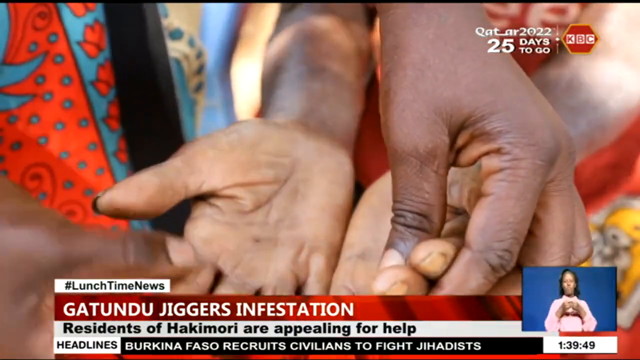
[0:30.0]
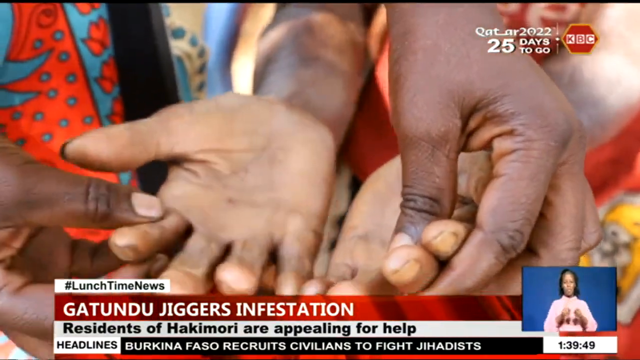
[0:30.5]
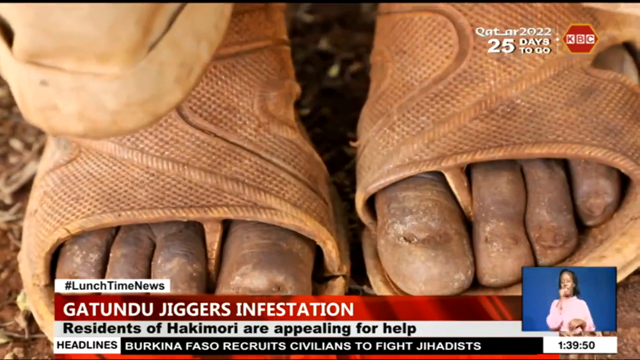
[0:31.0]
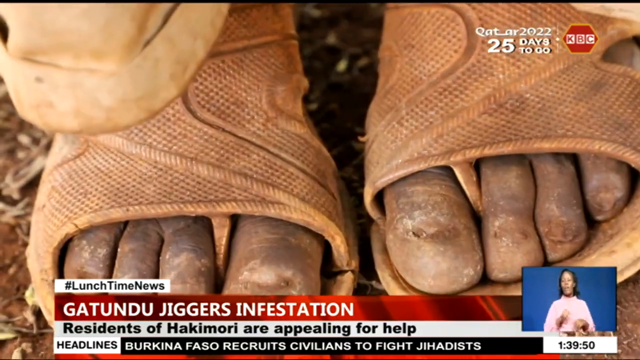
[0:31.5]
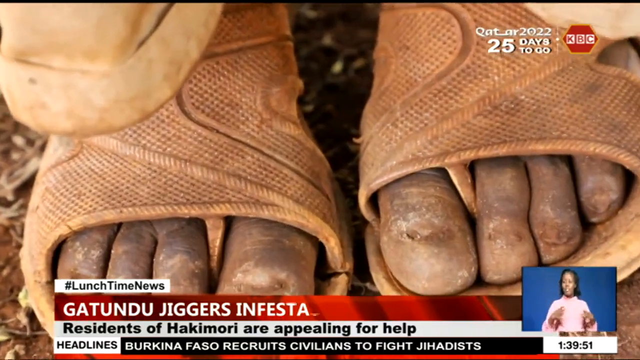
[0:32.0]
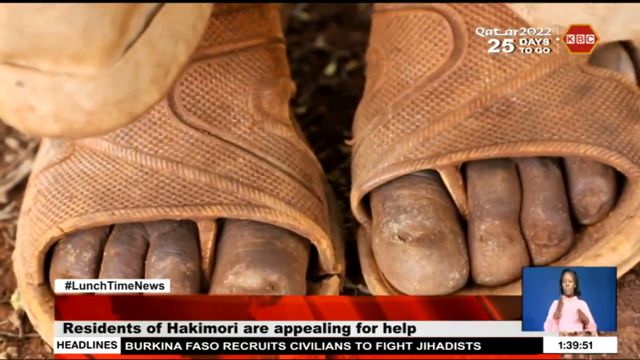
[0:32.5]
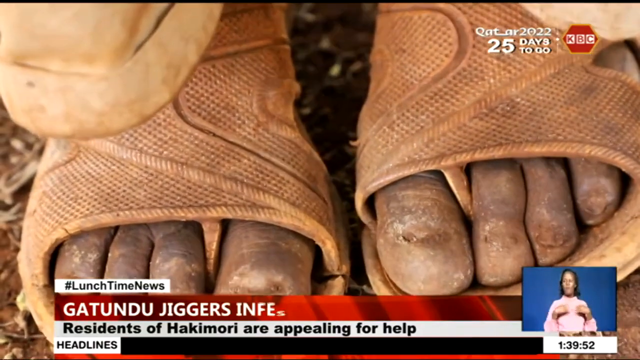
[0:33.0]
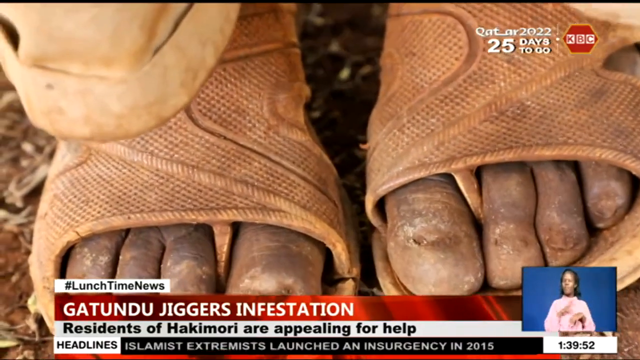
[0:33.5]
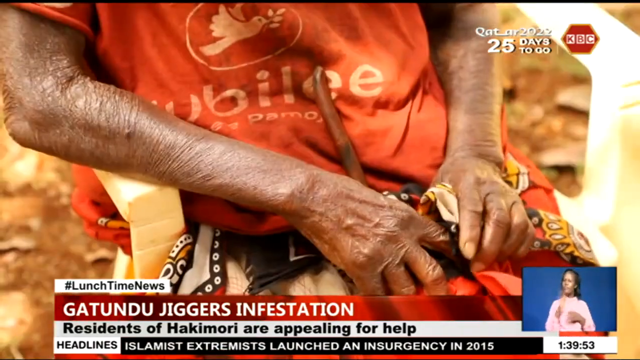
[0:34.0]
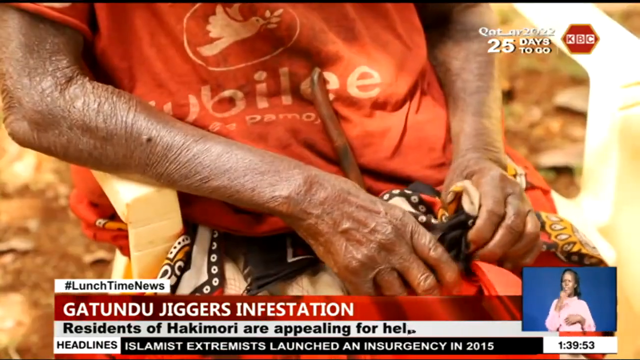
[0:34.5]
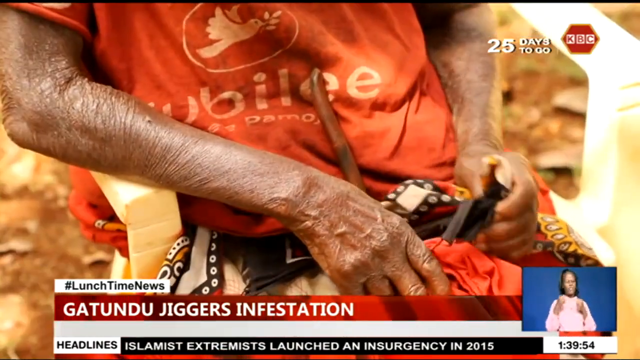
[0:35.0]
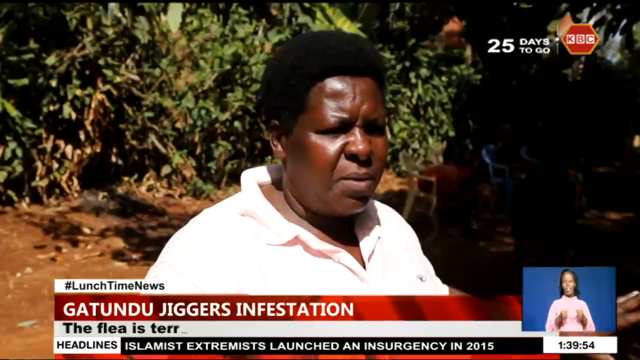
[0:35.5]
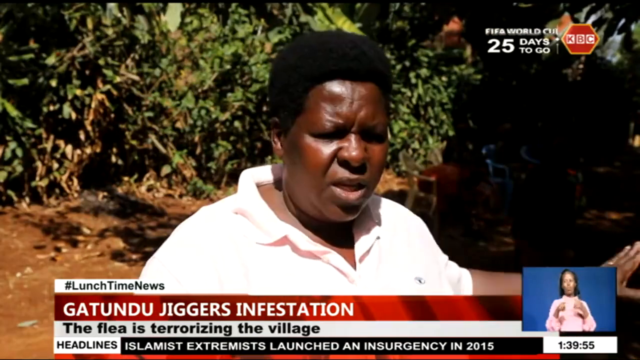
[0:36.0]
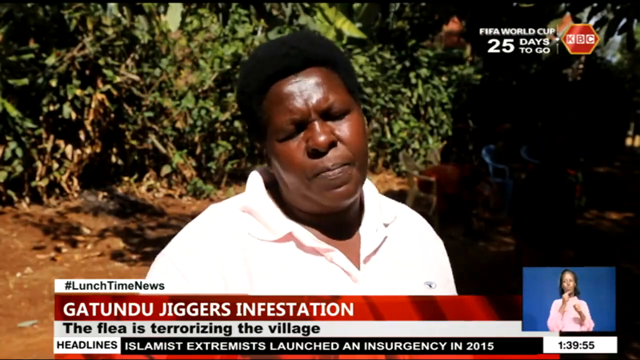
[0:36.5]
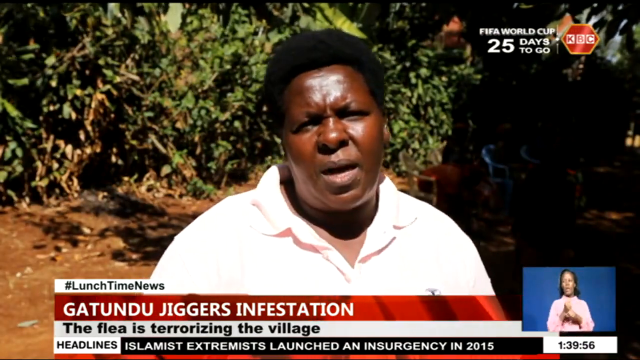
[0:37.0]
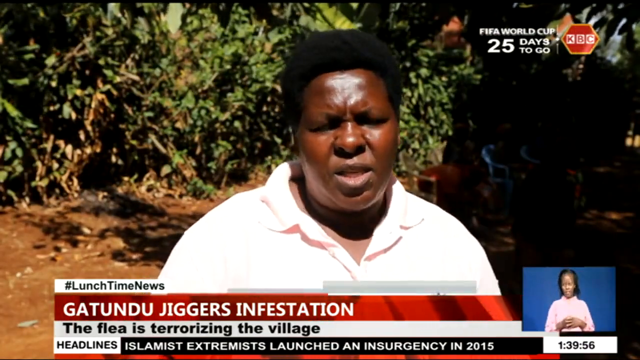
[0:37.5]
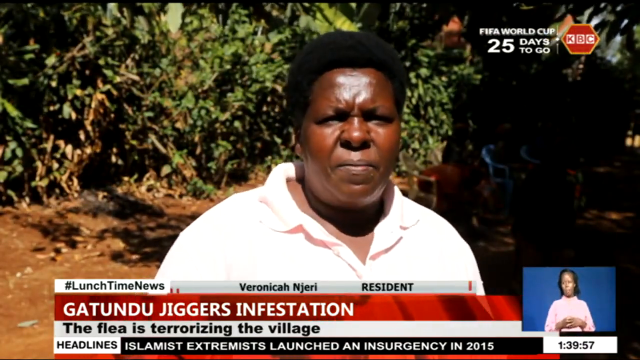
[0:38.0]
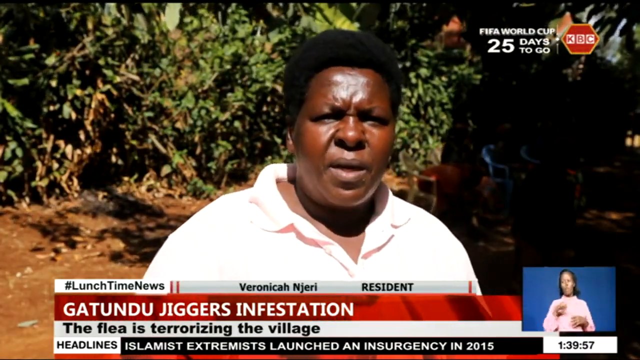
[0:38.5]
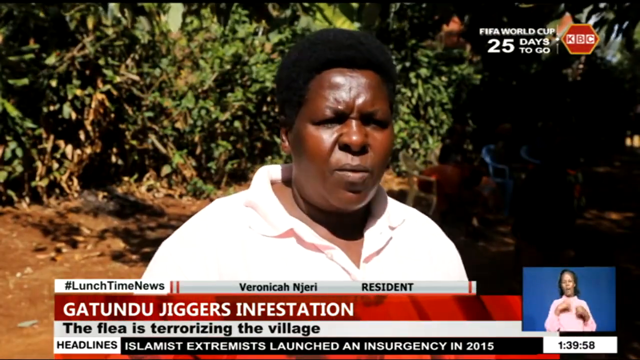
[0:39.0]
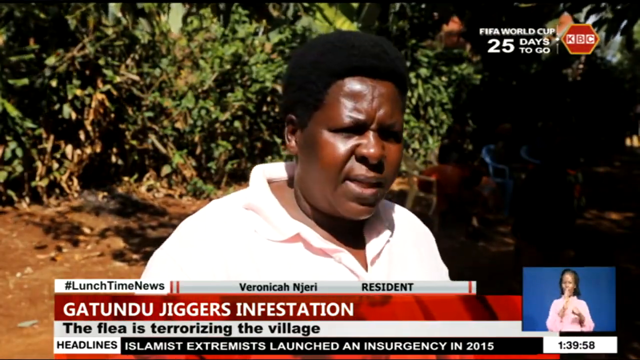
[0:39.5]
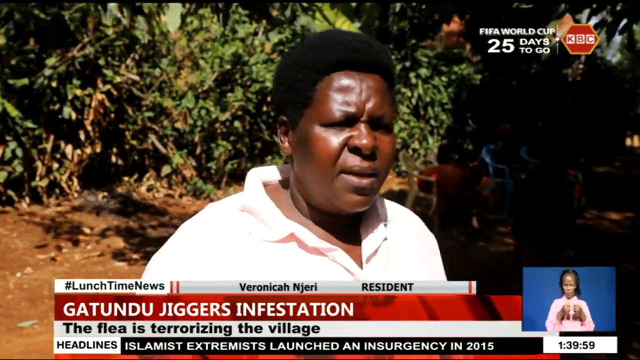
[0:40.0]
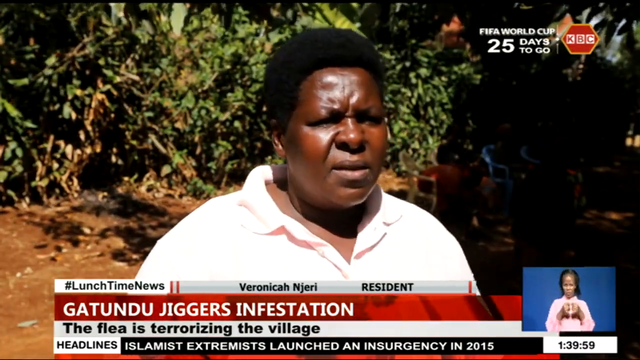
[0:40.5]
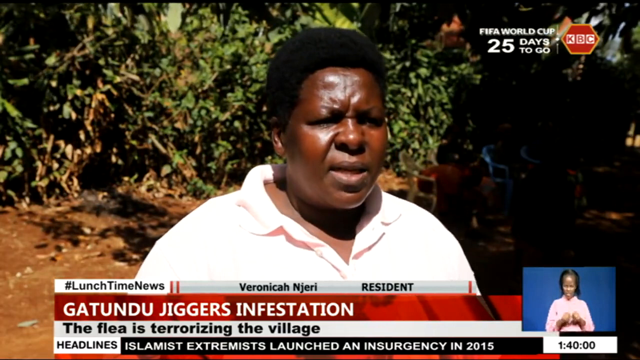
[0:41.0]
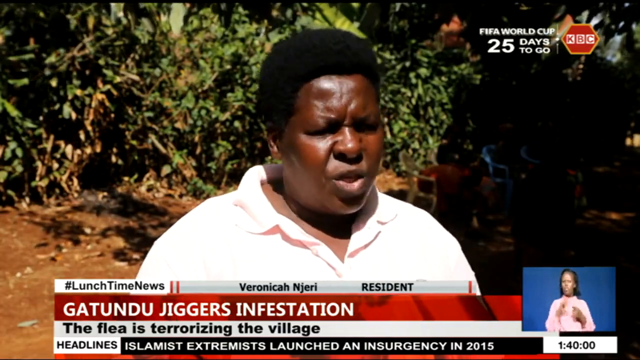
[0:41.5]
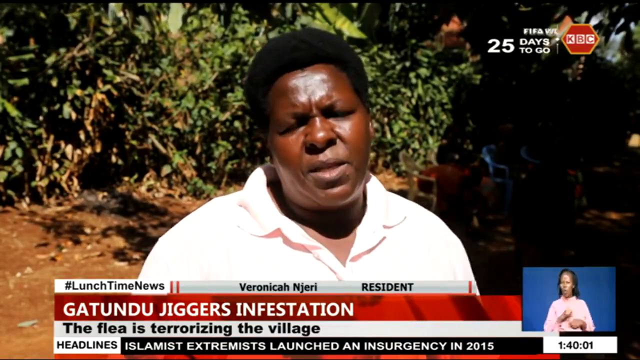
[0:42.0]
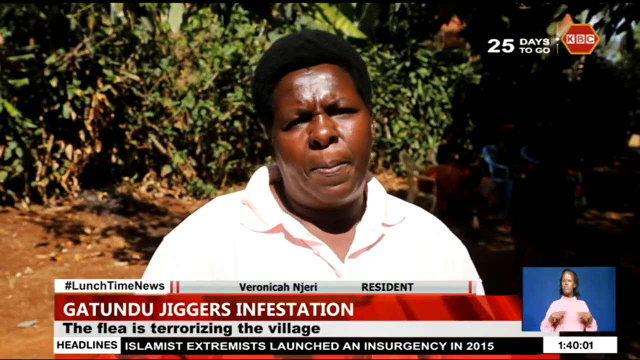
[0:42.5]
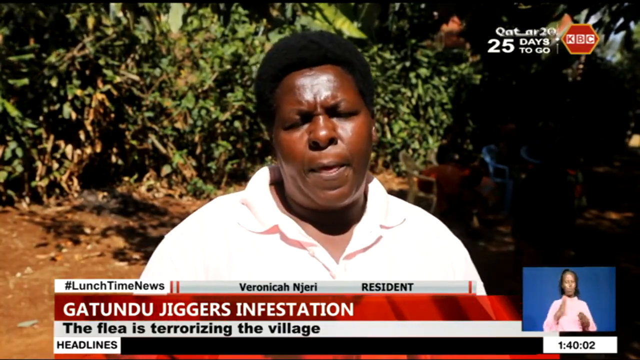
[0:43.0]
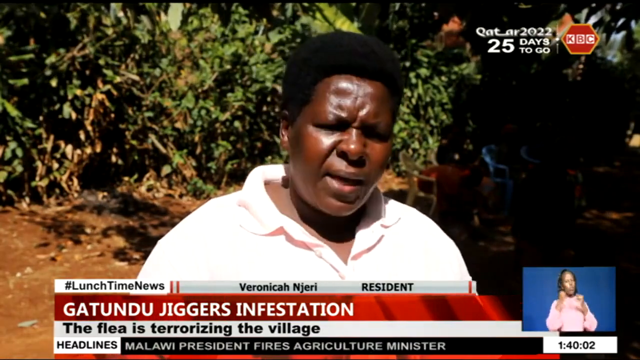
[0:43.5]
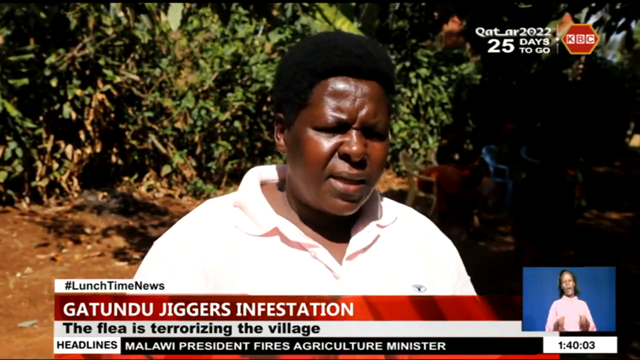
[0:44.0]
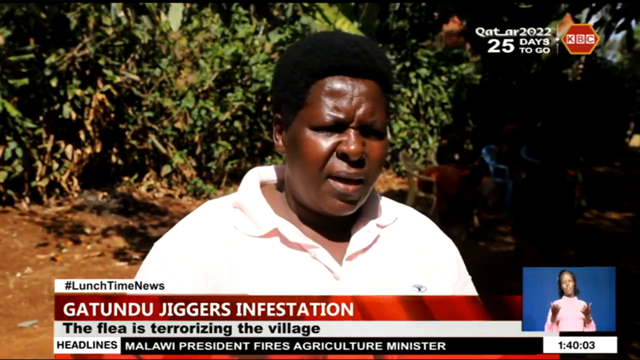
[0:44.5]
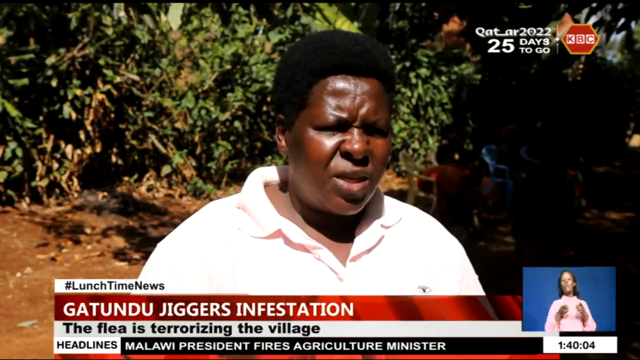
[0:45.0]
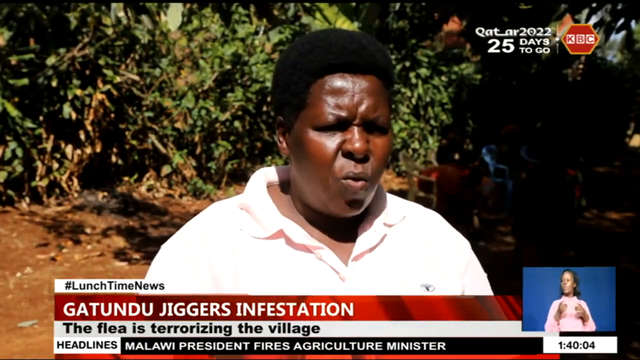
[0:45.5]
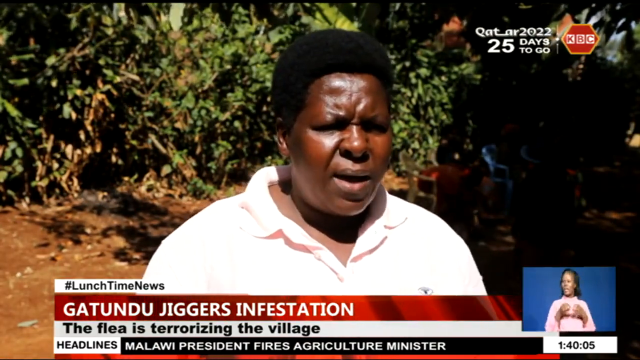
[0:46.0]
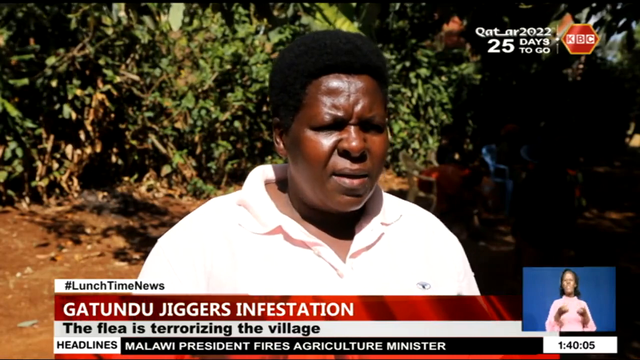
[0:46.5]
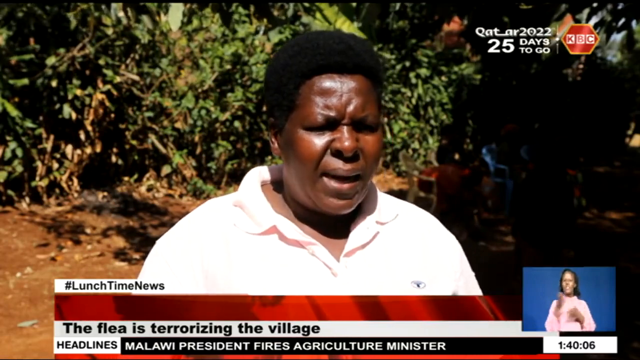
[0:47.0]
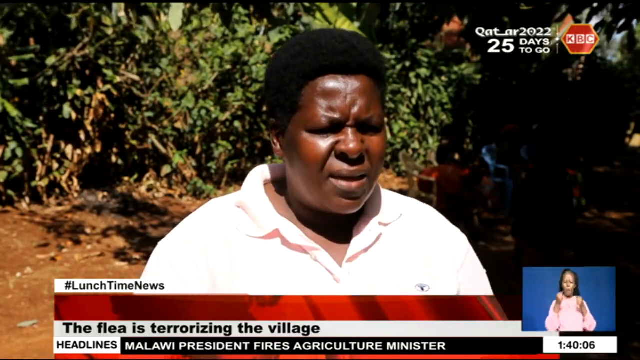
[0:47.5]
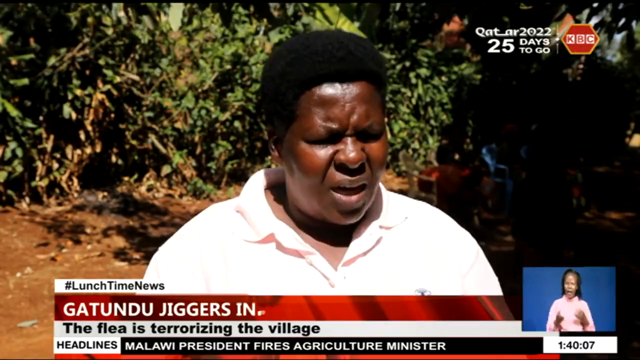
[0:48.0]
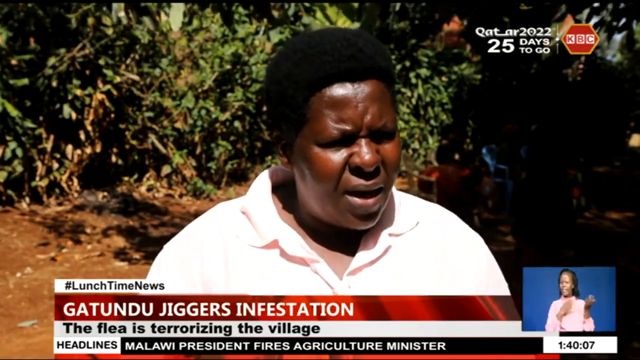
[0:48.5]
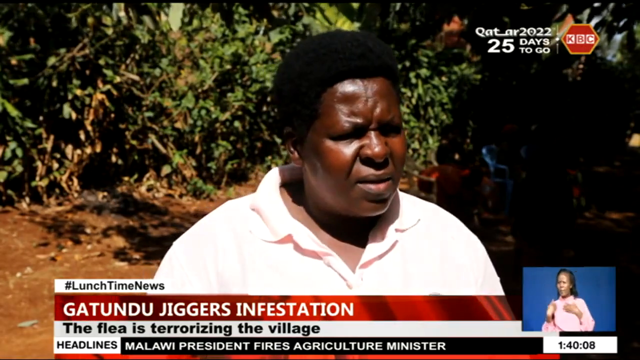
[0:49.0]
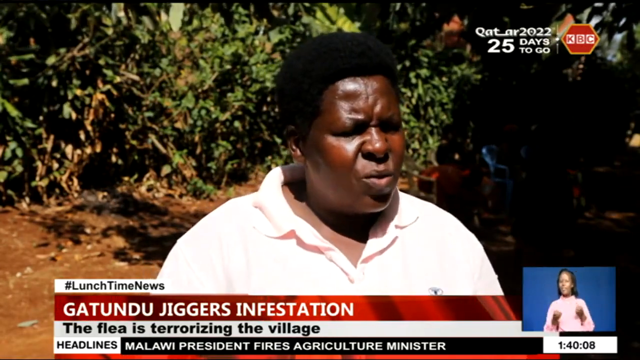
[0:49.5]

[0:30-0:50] The scene begins with four hands: two are turned up, and the other two are holding the fingers of the upturned hands. The people are black, brown-skinned, and wearing colorful outfits. At the bottom left is "#lunchtime news" and "Guntada Jiggers infestation, residents of Hakamari are appealing for help." On a monitor in the bottom right is a black, brown-skinned woman who is a sign language interpreter. At the top is written "Qatar 22, 25 days to go," and next to it, in a symbol, is "KBC." The scene then changes to brown-skinned feet in sandals with dirty, poorly cut nails, standing on what appears to be a dirt surface. Next is a person in an orange shirt that says "Ubele," with a white bird or dove in a circle. Their arms, hands and fingers are brown and wrinkled. They are holding something and appear to be sitting, perhaps on a chair, on brown dirt ground.